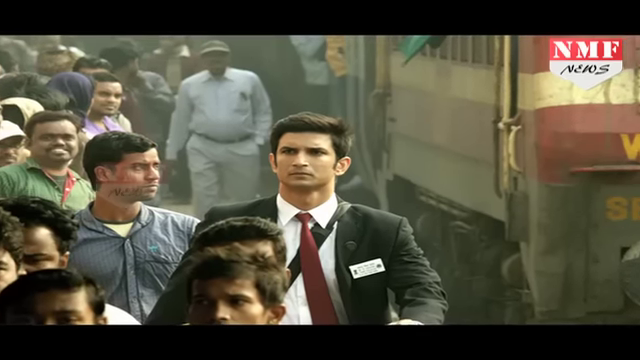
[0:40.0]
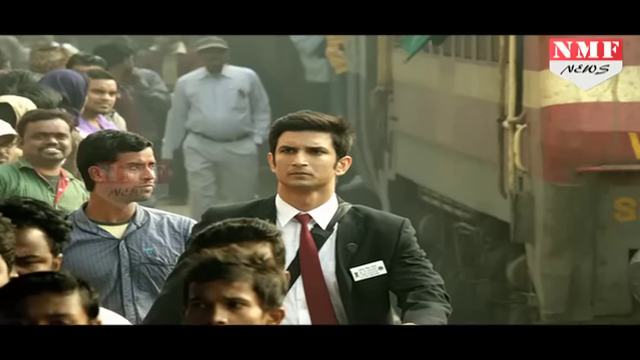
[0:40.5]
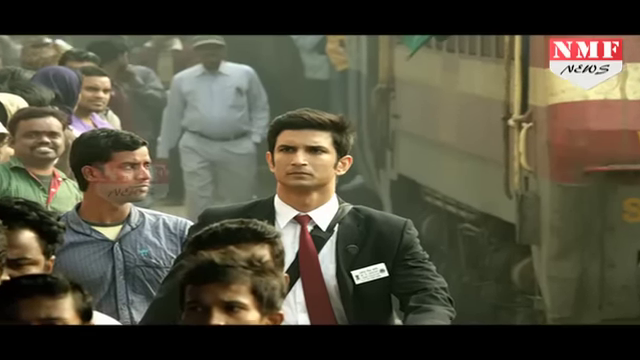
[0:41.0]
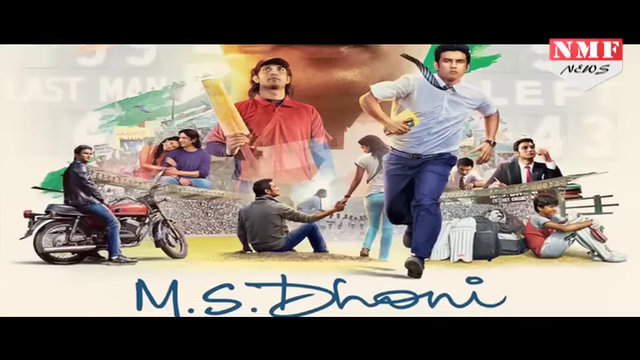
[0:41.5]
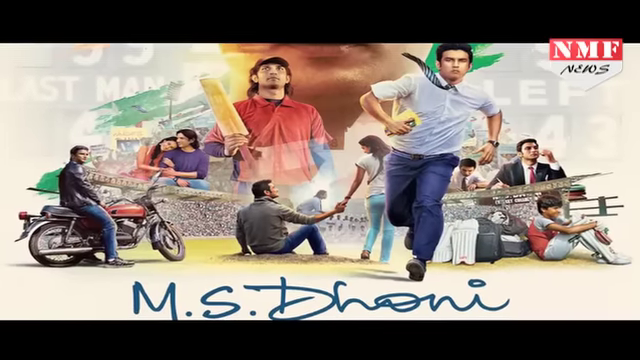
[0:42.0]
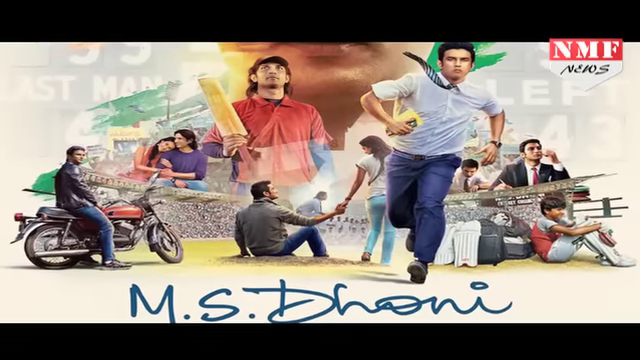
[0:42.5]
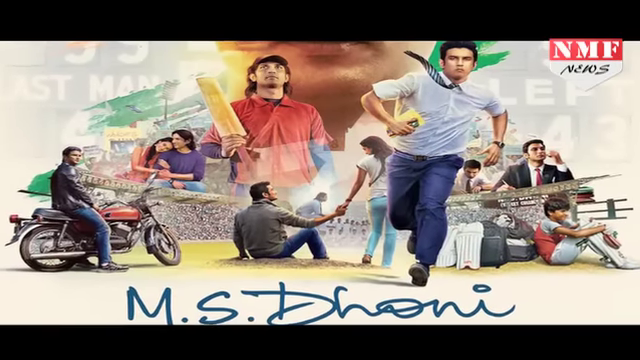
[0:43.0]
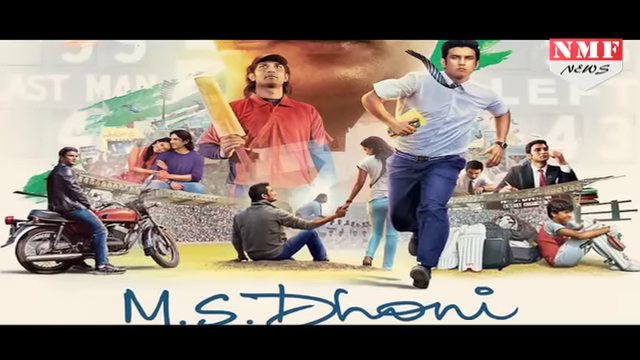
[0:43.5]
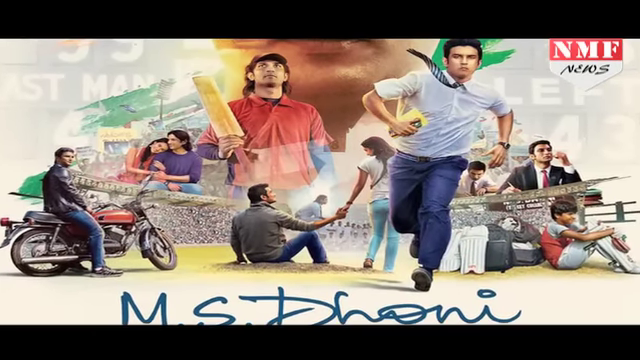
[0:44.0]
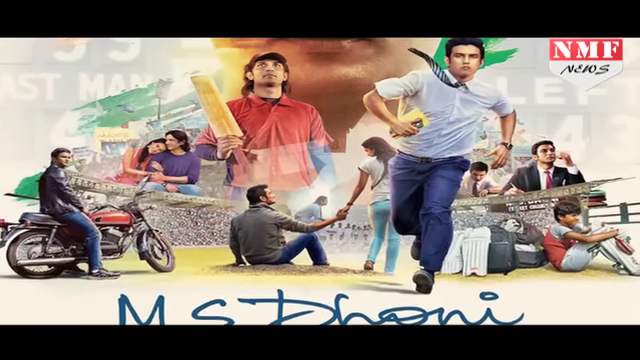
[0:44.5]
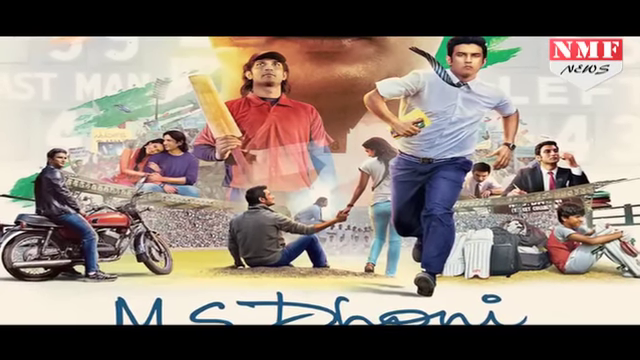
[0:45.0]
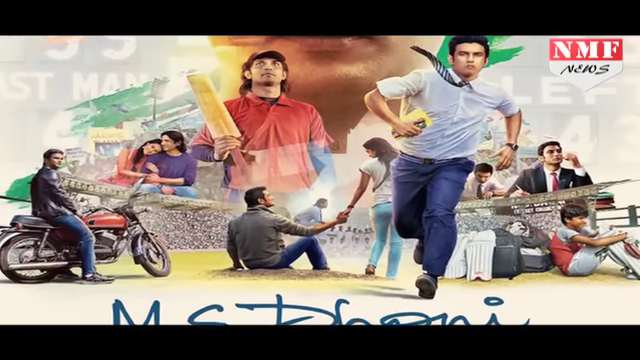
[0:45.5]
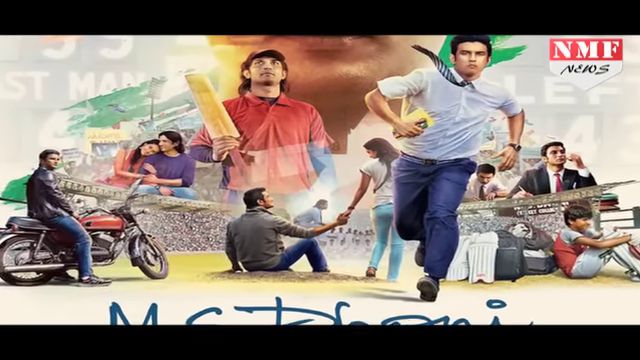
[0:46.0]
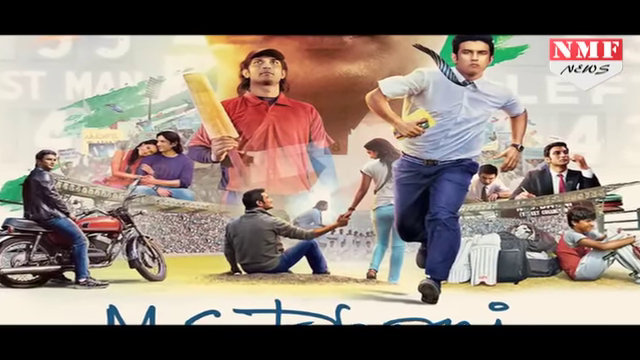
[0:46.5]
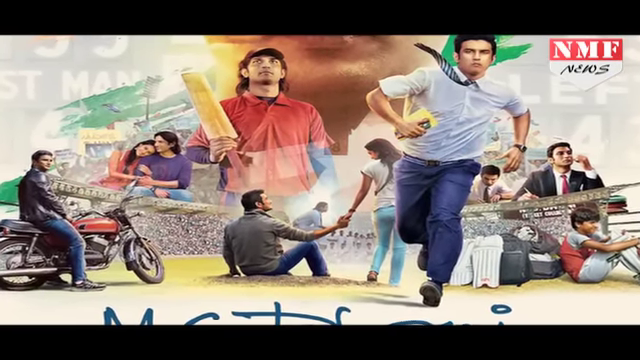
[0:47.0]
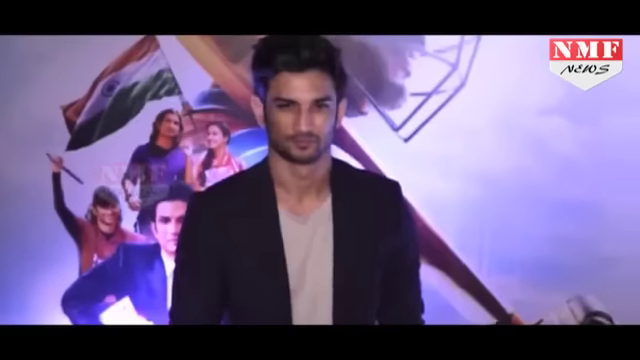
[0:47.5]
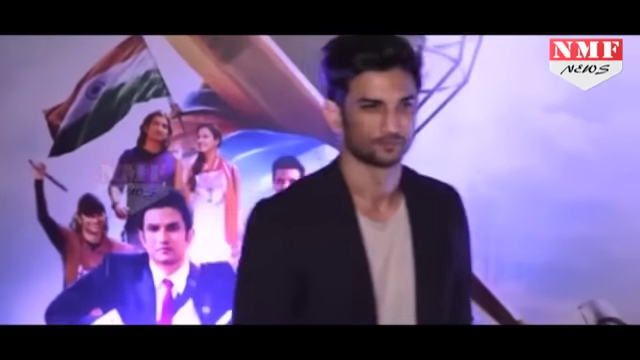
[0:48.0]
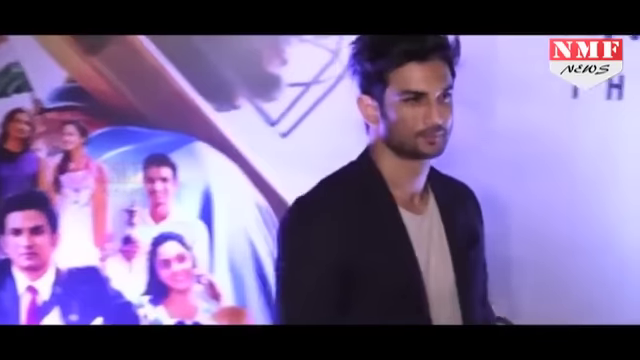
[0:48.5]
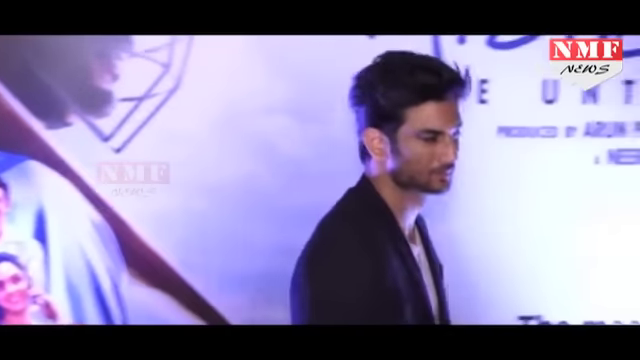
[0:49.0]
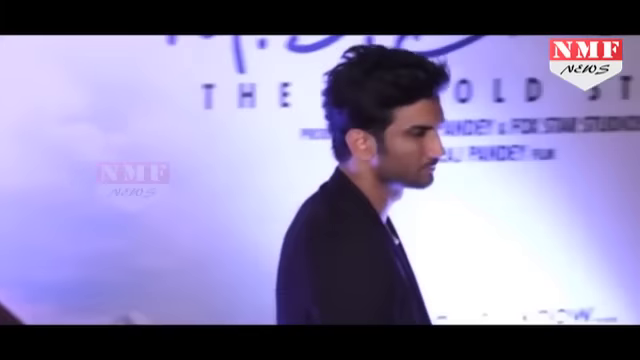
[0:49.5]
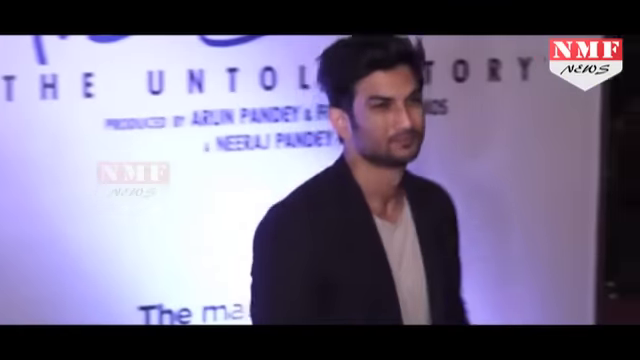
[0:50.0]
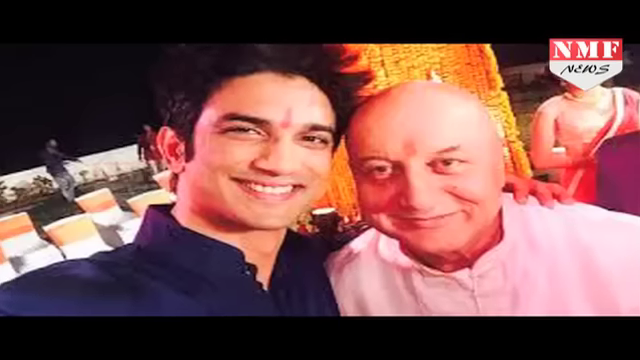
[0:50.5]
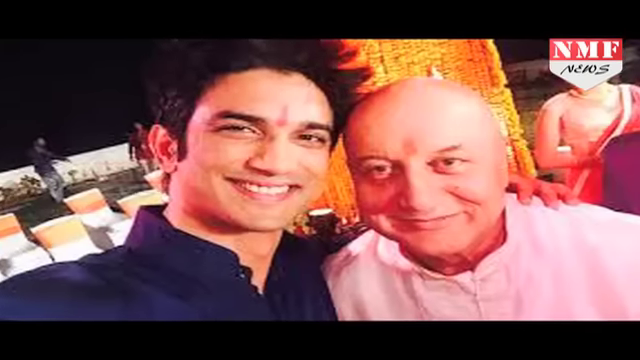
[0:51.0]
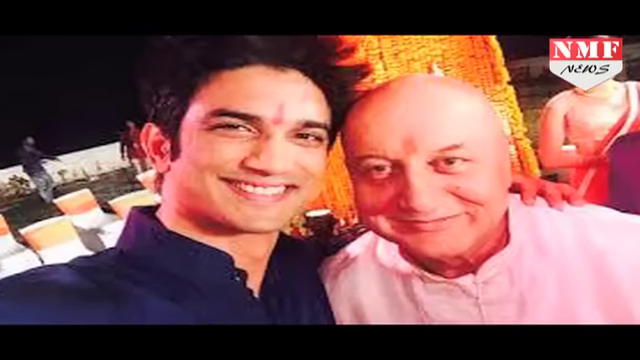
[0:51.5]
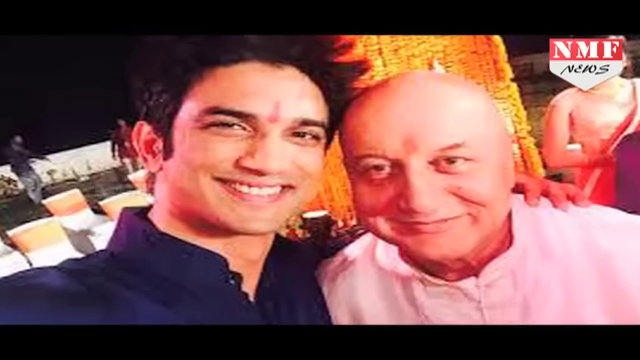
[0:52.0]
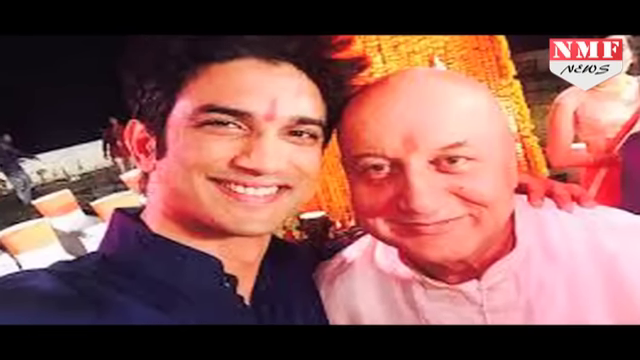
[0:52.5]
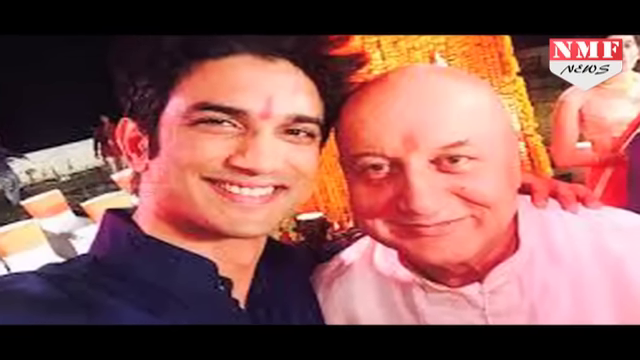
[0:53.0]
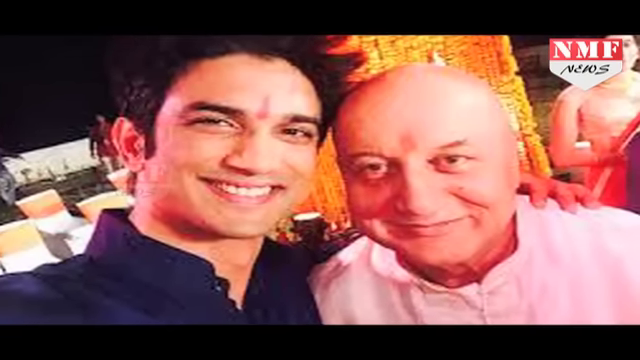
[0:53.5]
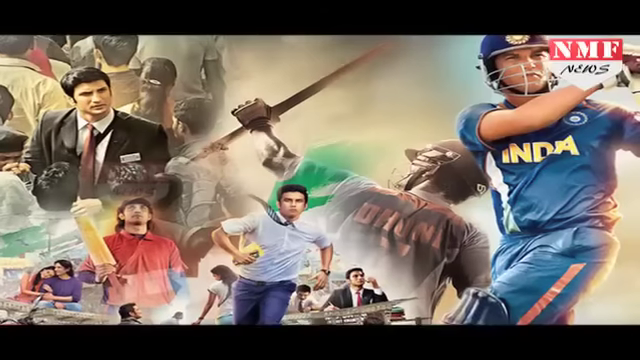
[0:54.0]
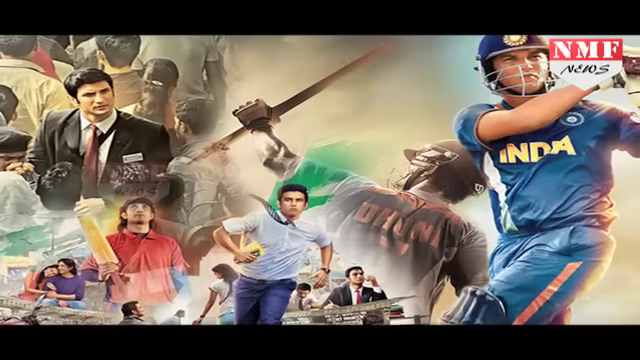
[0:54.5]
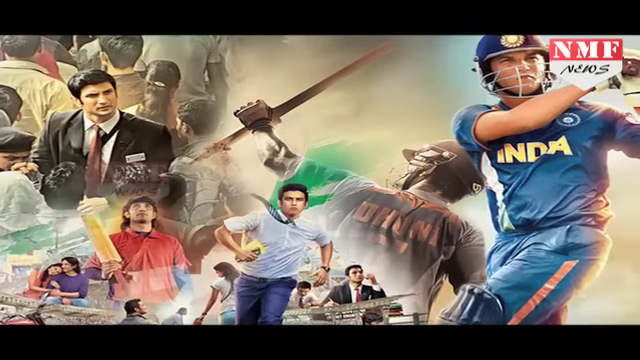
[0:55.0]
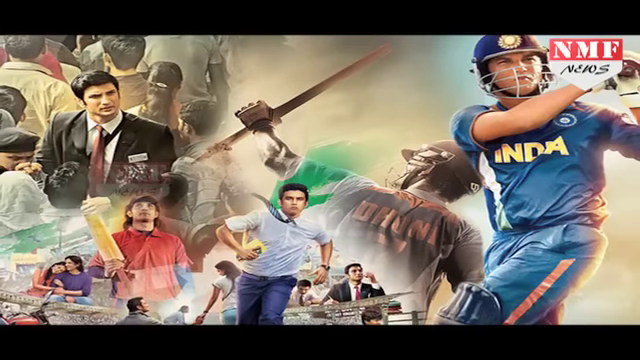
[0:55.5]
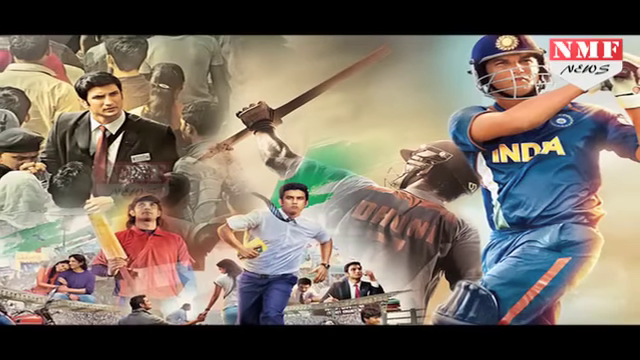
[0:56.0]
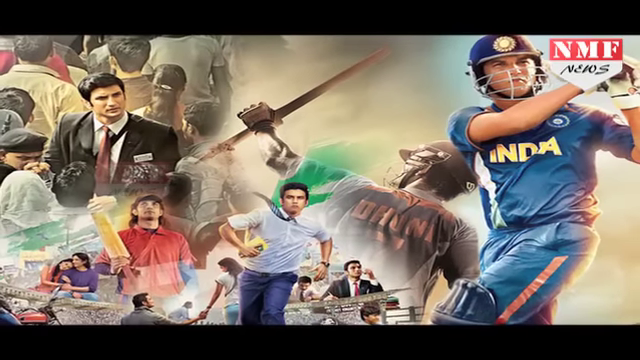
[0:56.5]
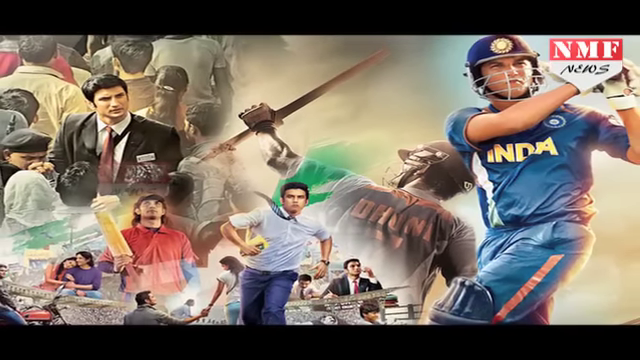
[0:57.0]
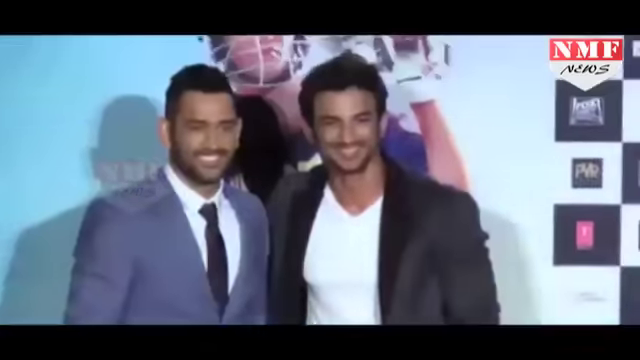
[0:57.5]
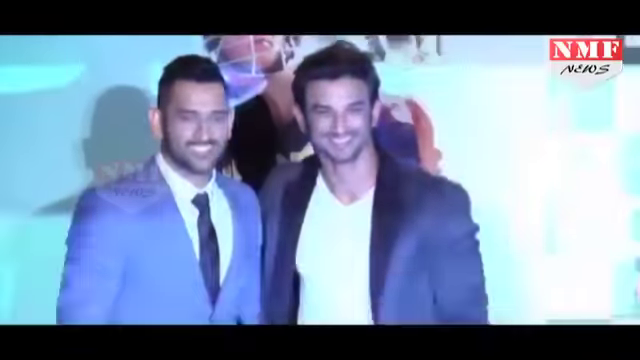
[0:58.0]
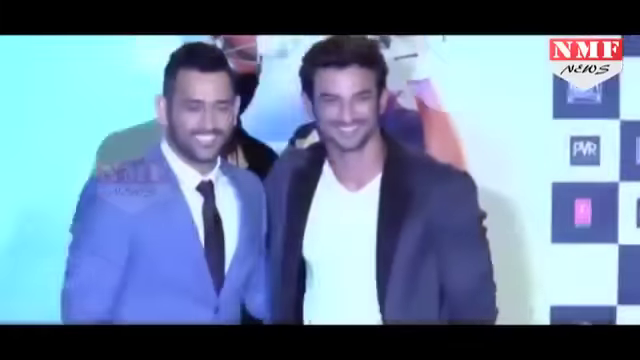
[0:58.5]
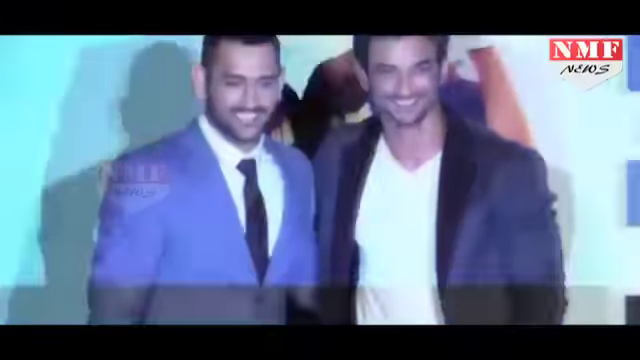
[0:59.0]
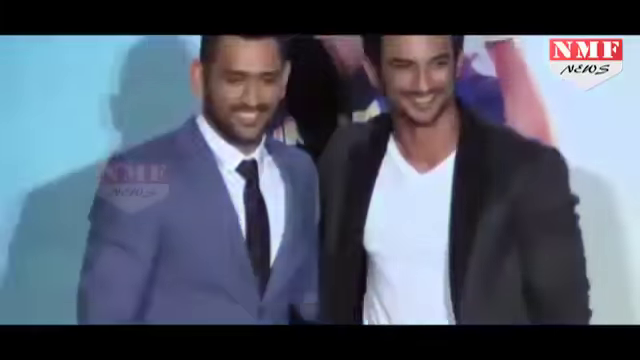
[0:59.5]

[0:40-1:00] A tall man with dark hair, wearing a dark suit, a white shirt and a red tie, walks through a large crowd along a street, with people to his right and left. A large machine of some sort is on the street, and the scene goes back and forth between what look like clips from the movie. A picture of different scenes follows: him on a motorcycle, him holding the hand of a girl with dark hair, him in his dark suit and red tie, and him as a little boy sitting on the side of the street by suitcases. A live shot then shows him, possibly at his premiere, in a black jacket and white shirt, standing in front of a screen that says "MS Dhoni, the untold story". He looks at the crowd and smiles for the camera as camera flashes go off.